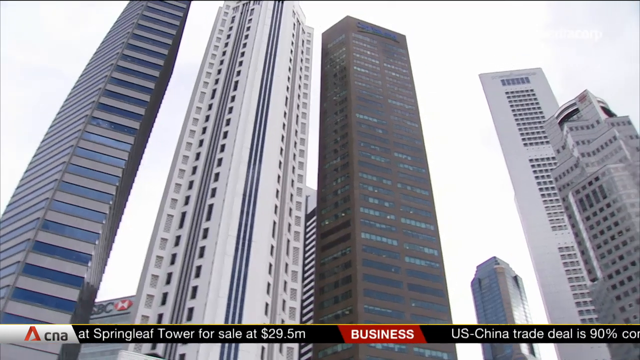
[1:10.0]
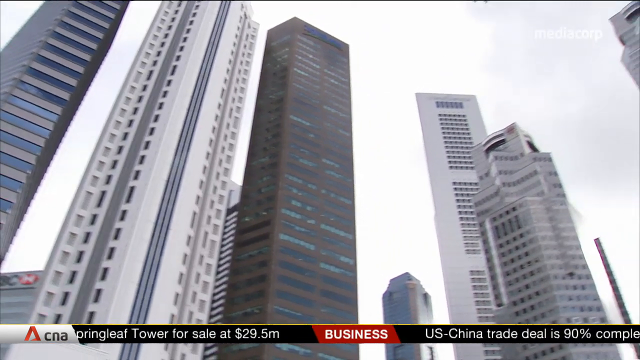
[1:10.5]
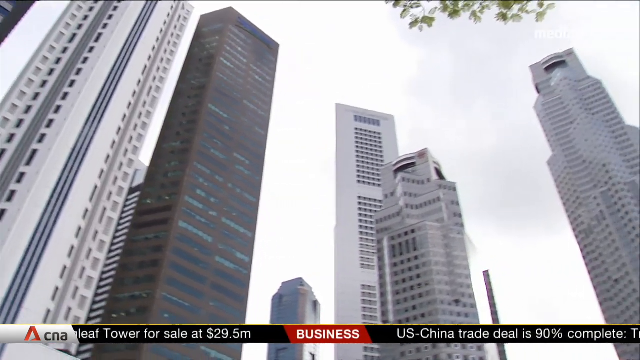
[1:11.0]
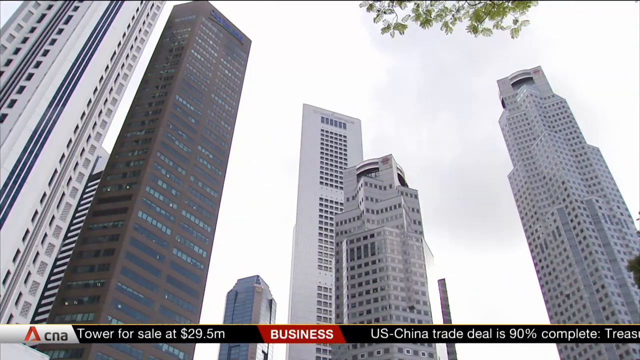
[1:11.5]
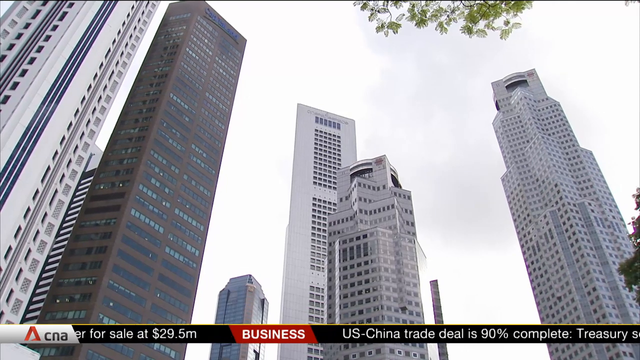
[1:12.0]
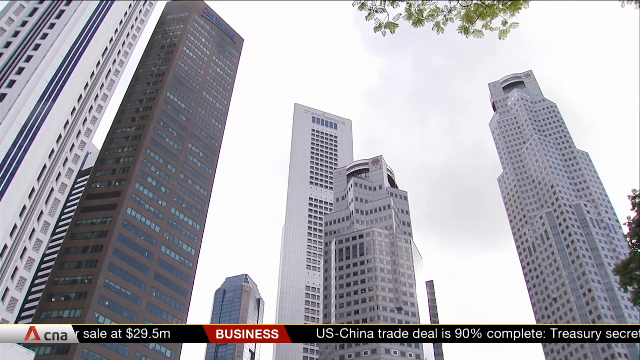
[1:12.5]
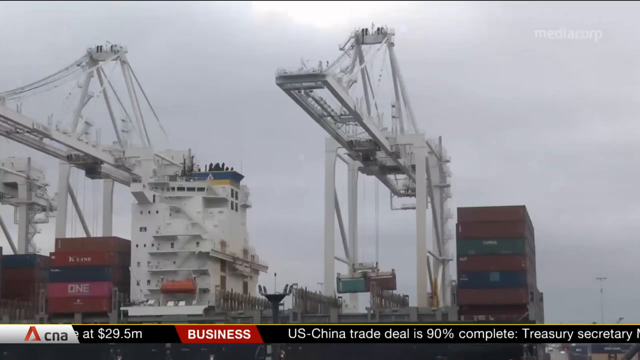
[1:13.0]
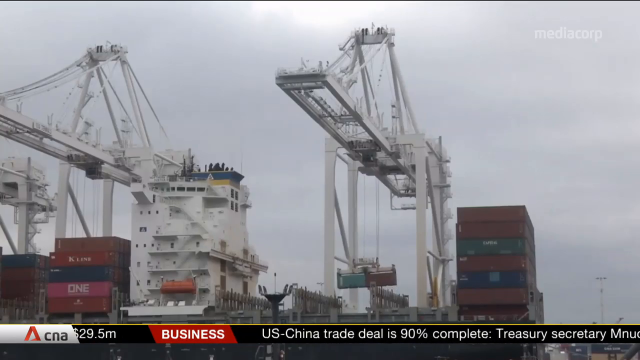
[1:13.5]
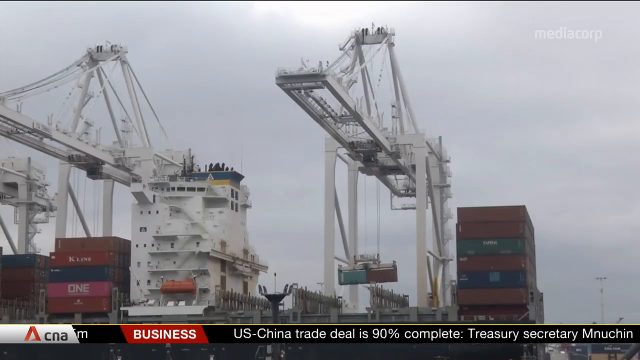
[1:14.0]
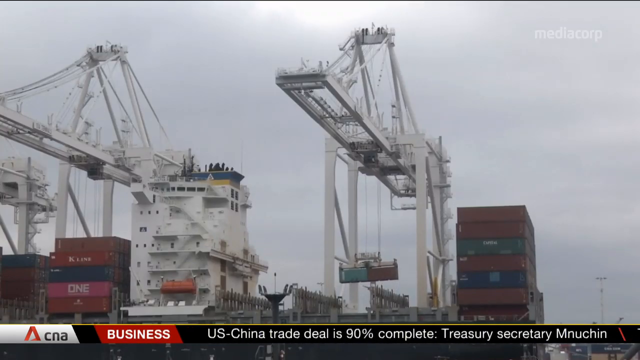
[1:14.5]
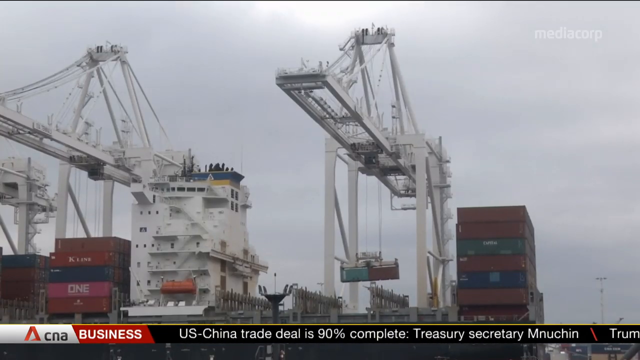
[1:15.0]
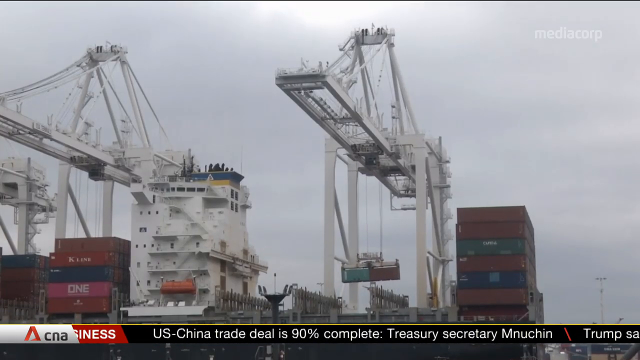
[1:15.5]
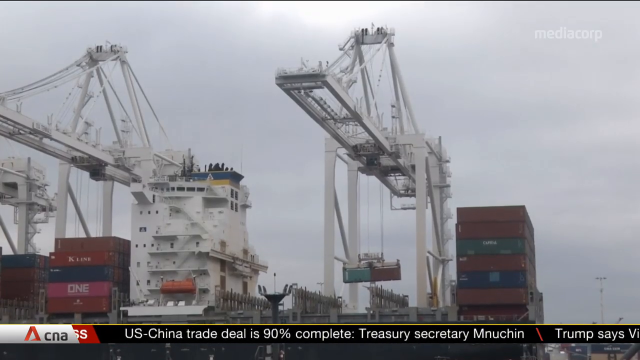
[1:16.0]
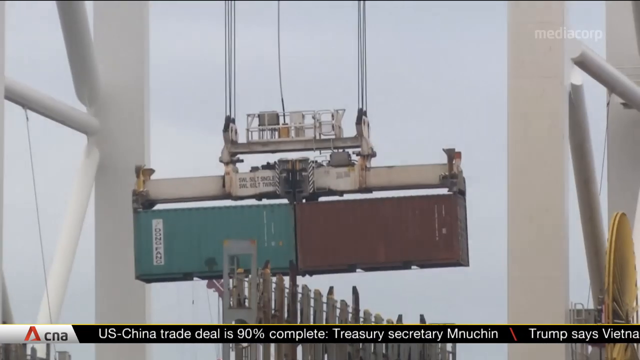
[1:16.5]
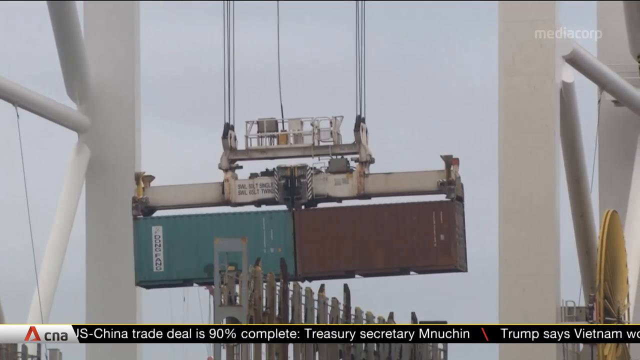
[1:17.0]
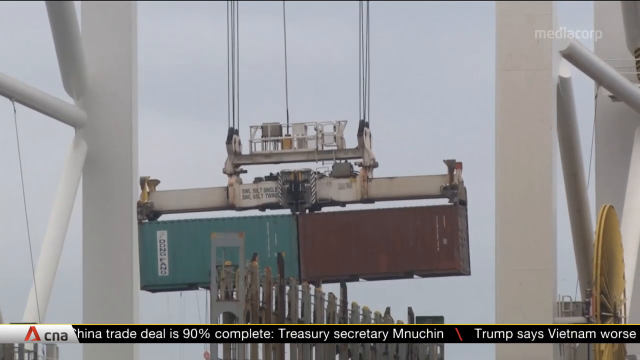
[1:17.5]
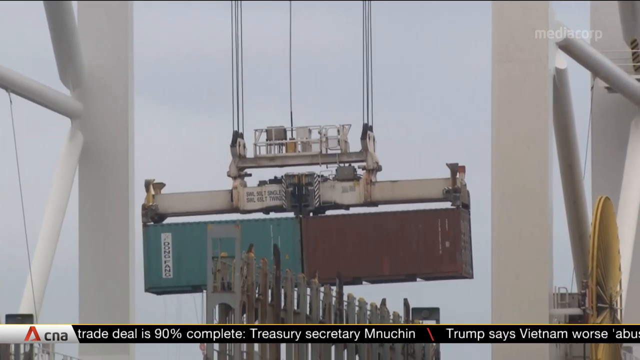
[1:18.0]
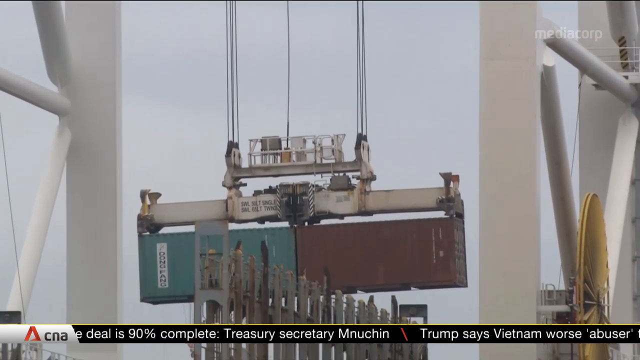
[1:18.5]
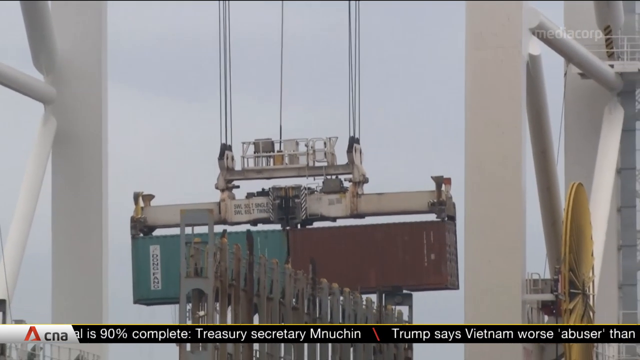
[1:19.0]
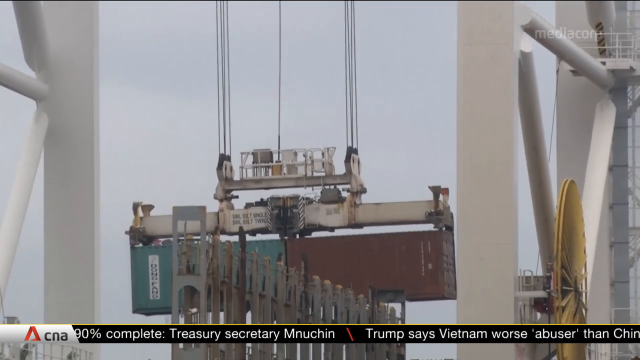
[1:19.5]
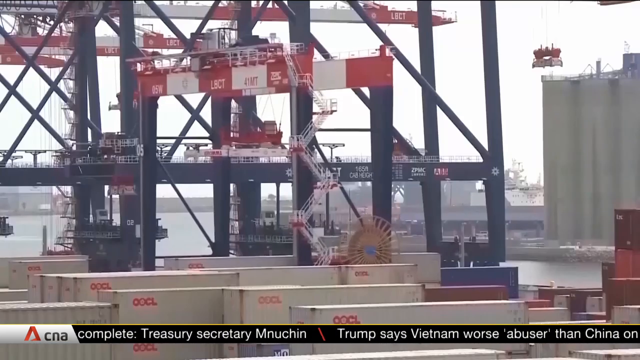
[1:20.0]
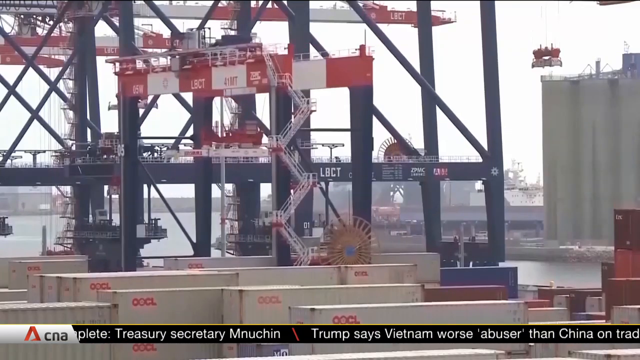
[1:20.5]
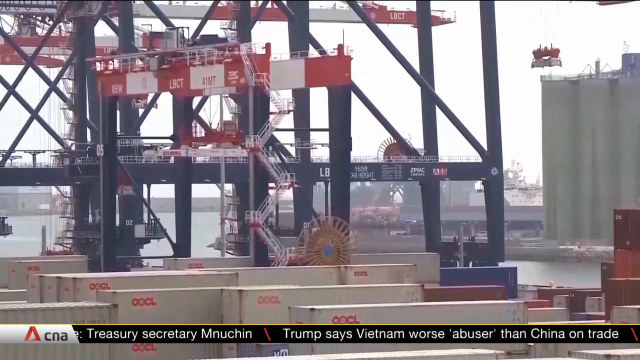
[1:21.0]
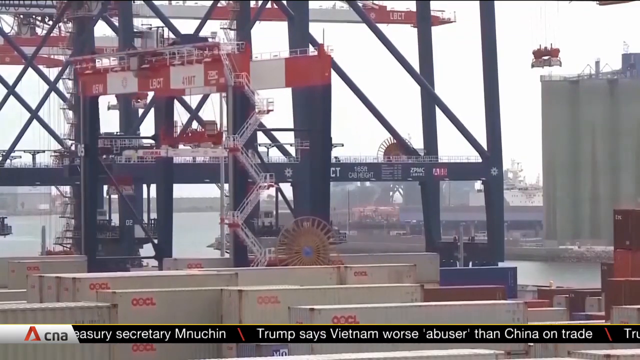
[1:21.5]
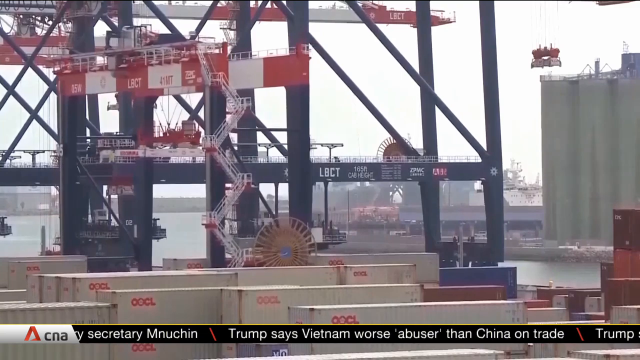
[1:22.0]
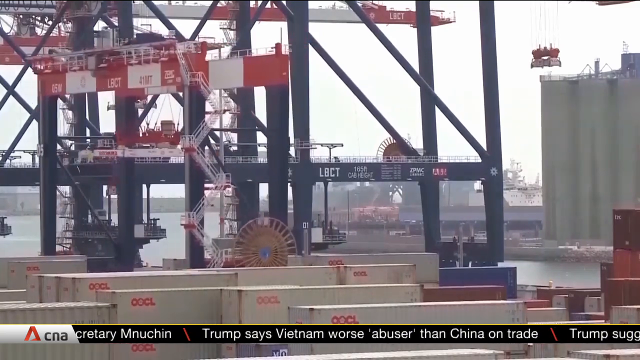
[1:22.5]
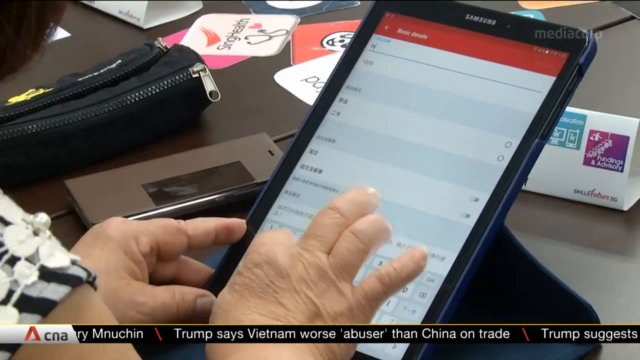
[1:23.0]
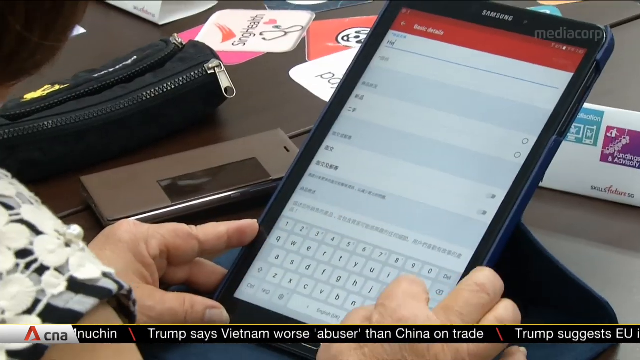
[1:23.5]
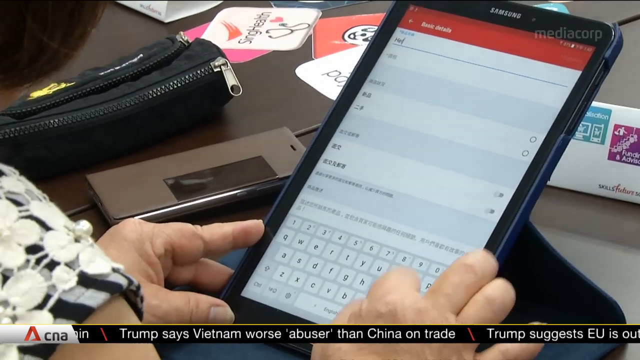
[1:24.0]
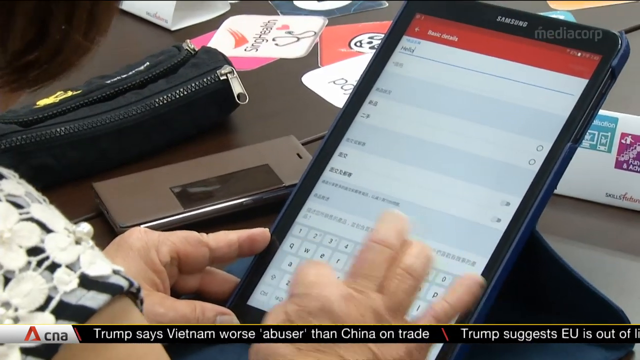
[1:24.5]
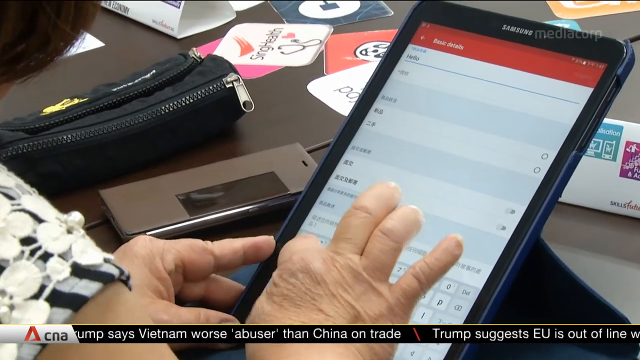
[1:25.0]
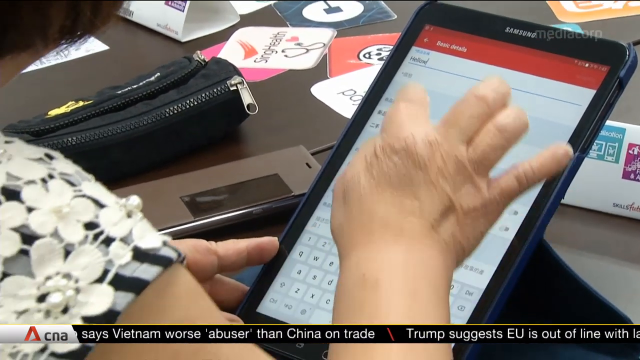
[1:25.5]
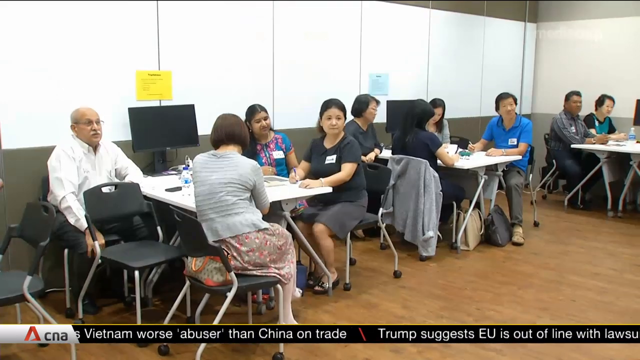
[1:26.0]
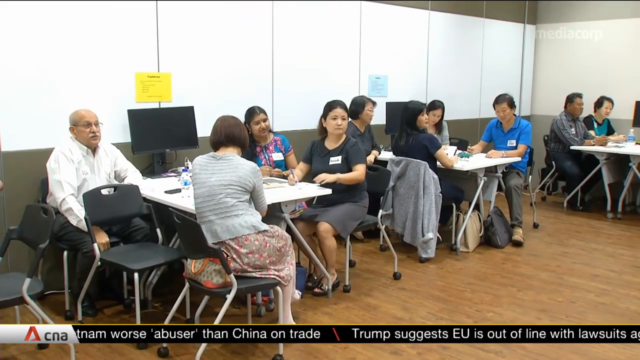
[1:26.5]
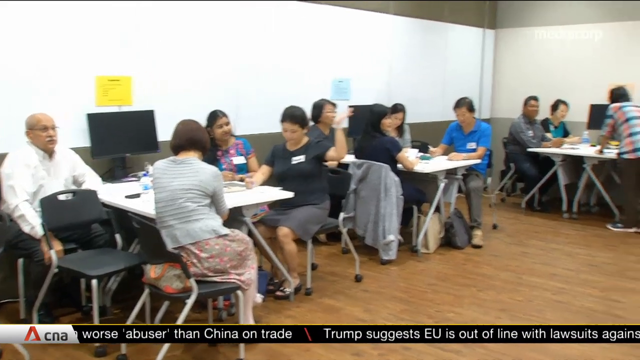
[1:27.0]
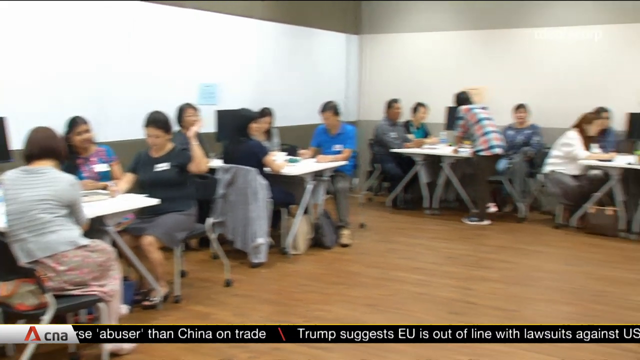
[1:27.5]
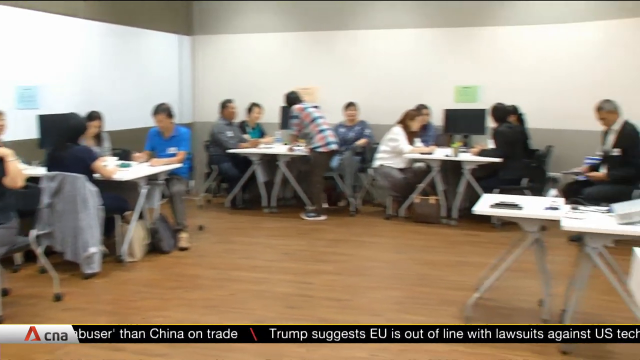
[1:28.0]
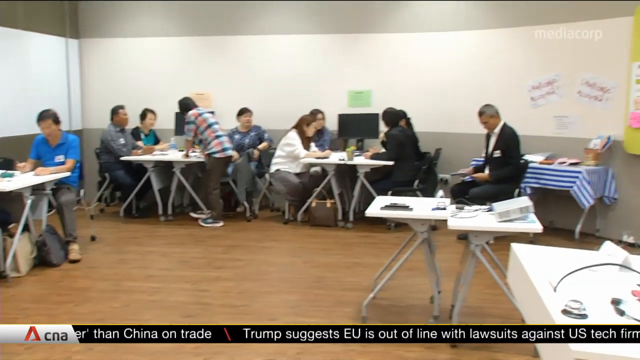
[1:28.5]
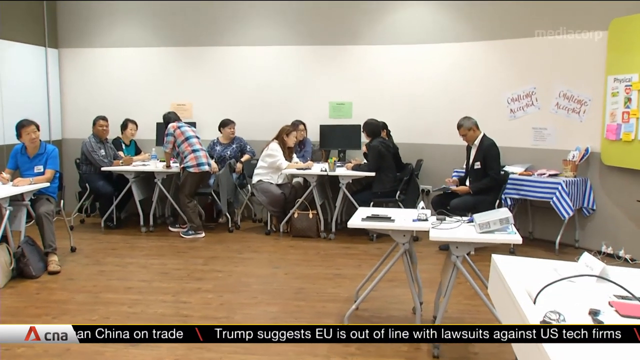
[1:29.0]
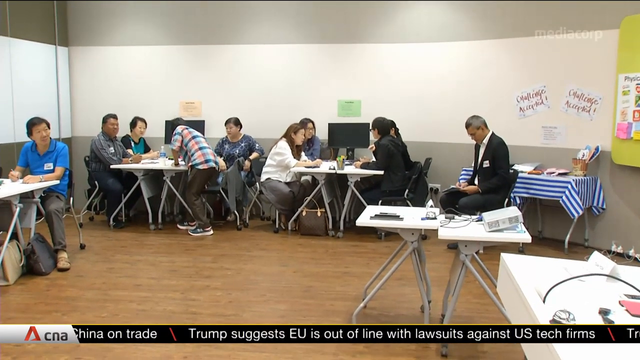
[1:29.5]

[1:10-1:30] From ground level, the camera pans across several skyscrapers while looking up towards the sky. Most are white and one is dark grey; they are not simple rectangles, and the architecture is slightly unusual. The sky above them is white, and branches of a tree are in the foreground. The video cuts to what appears to be a large port, where huge white cranes load containers onto large cargo ships. A close-up shows one container, green on its left side and red on its right, being lifted by one of the large white cranes and placed onto a cargo ship. Another shot shows more of the port operation, with lots more containers and a large blue metal frame that appears to support some of the equipment. Next is a close-up of a woman's hands holding a Samsung tablet; what she writes cannot be read, but the characters look Chinese. On the table she leans on are a dictaphone, a pencil case and some flyers or coasters. She types very quickly. Then comes a room with small white tables around the edges, with computers on them and four people sitting at each table, apparently some kind of work event. They are all typing and looking at paperwork.